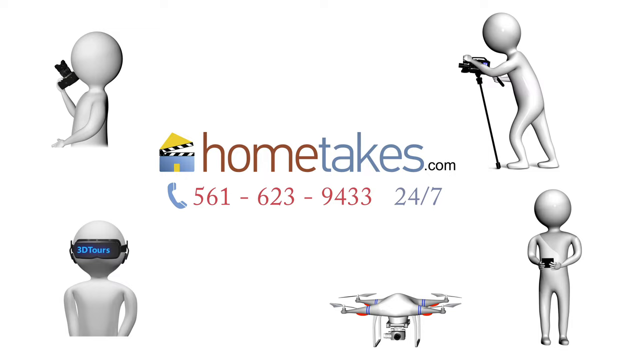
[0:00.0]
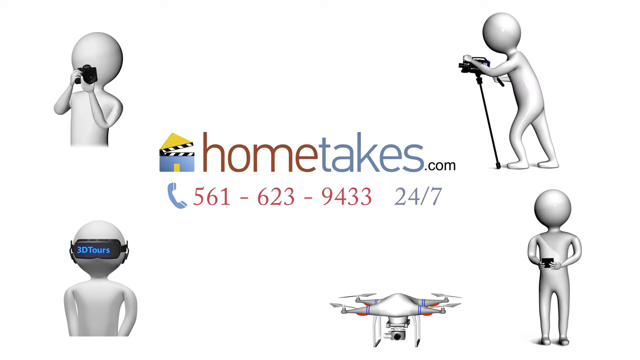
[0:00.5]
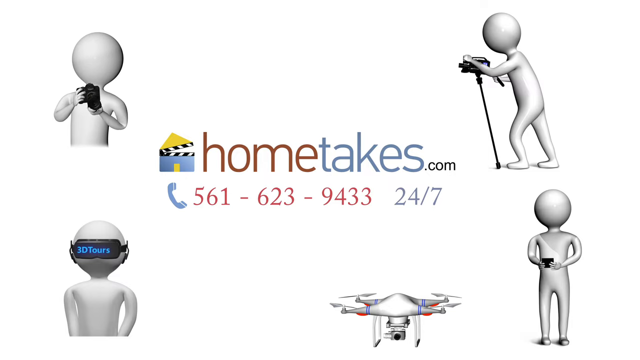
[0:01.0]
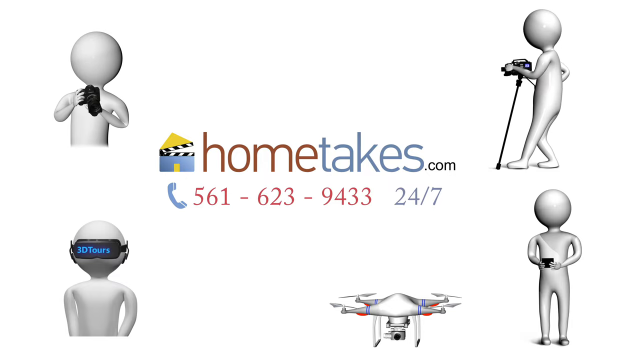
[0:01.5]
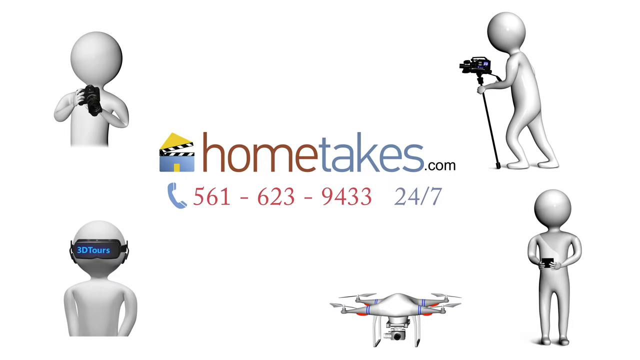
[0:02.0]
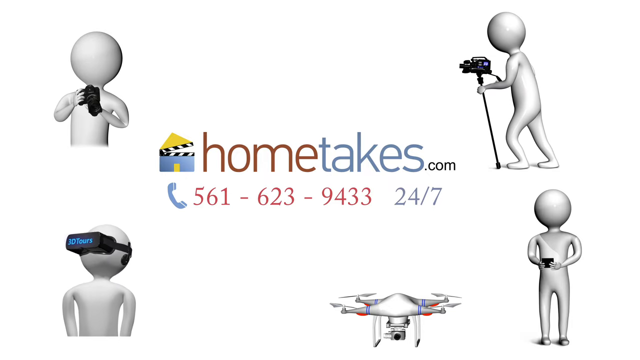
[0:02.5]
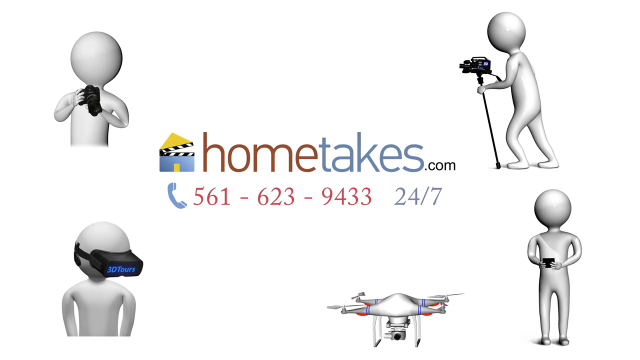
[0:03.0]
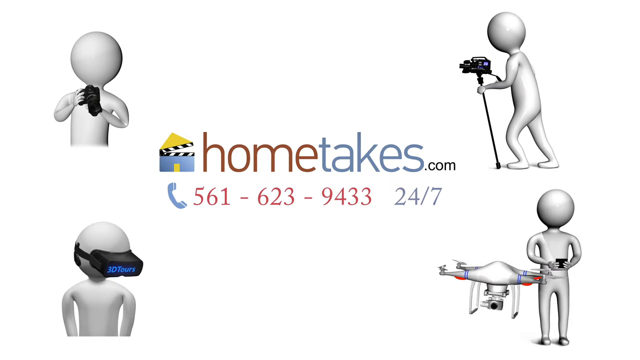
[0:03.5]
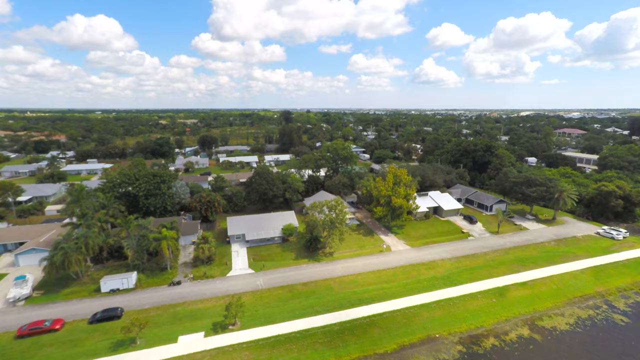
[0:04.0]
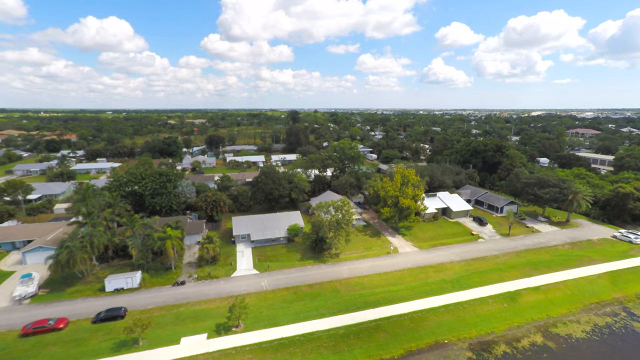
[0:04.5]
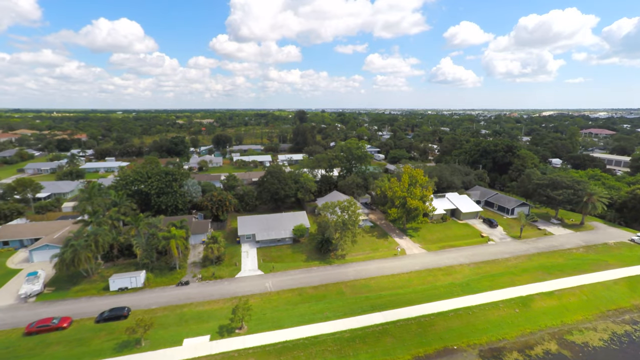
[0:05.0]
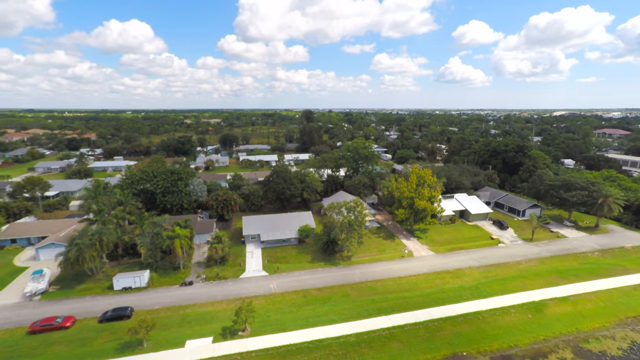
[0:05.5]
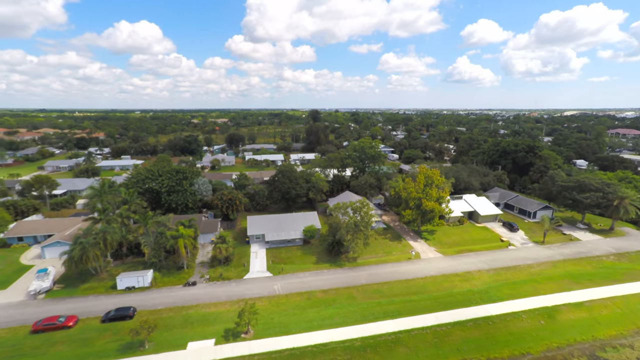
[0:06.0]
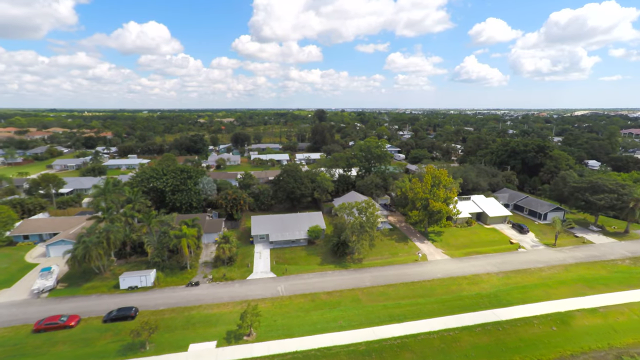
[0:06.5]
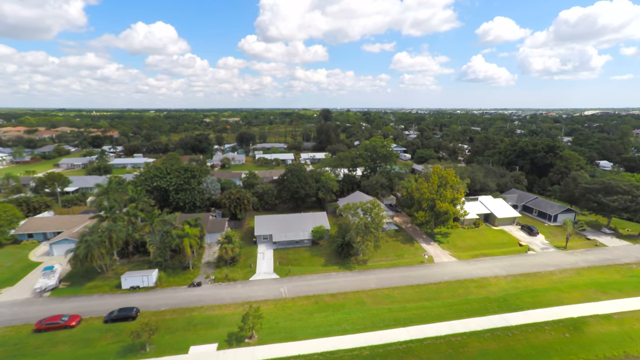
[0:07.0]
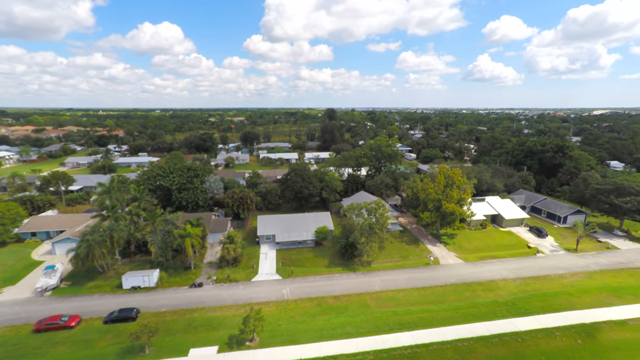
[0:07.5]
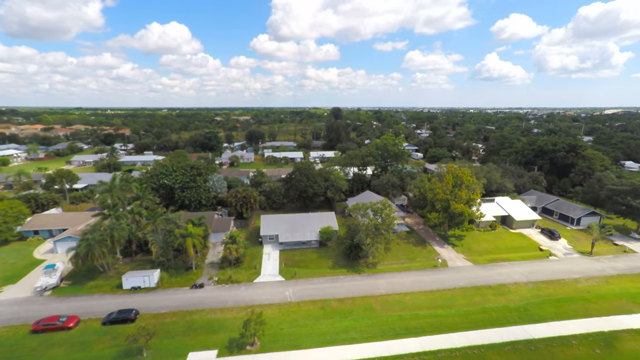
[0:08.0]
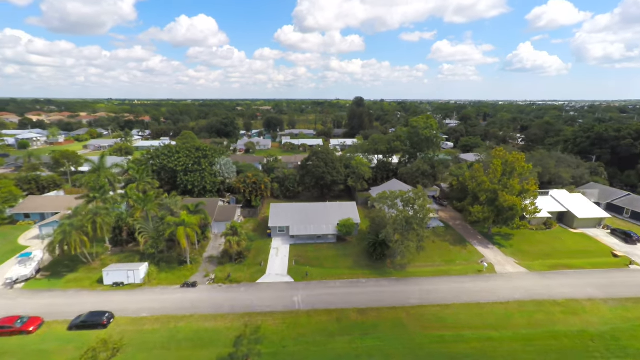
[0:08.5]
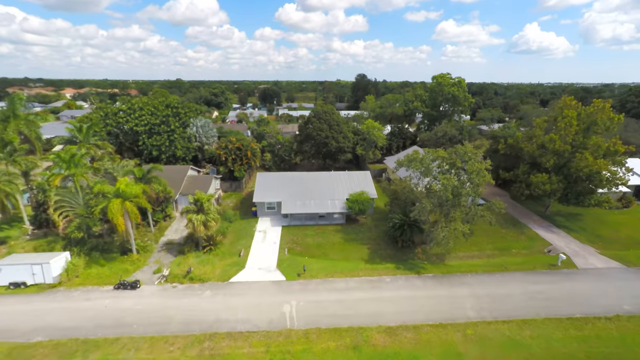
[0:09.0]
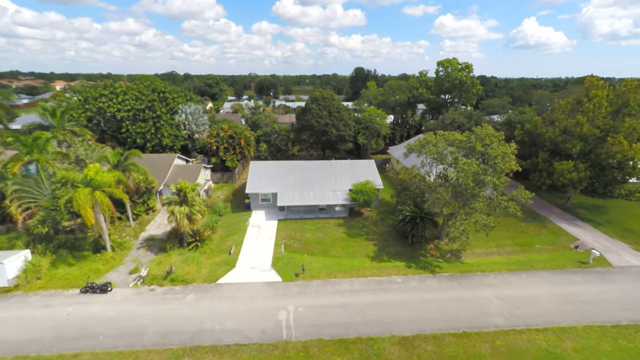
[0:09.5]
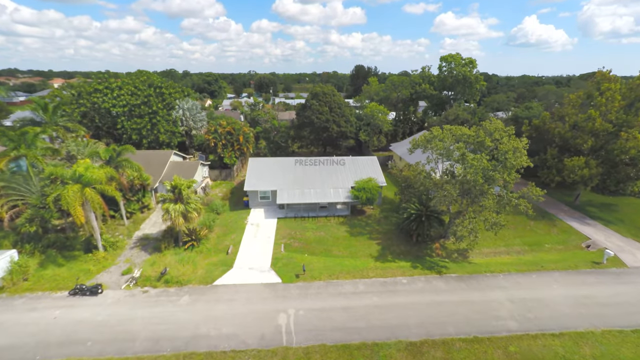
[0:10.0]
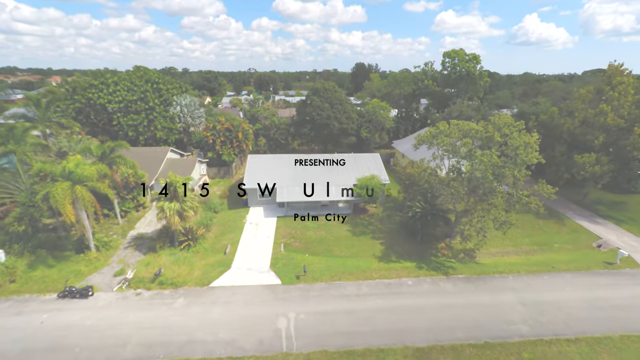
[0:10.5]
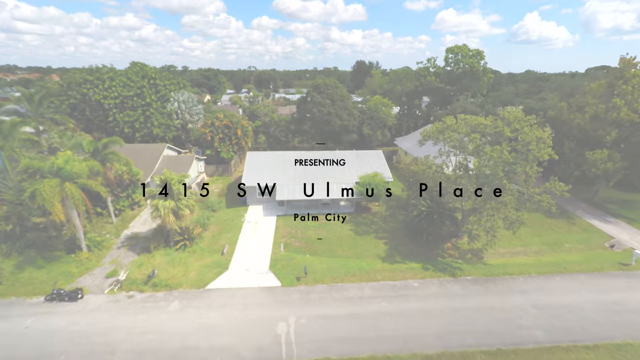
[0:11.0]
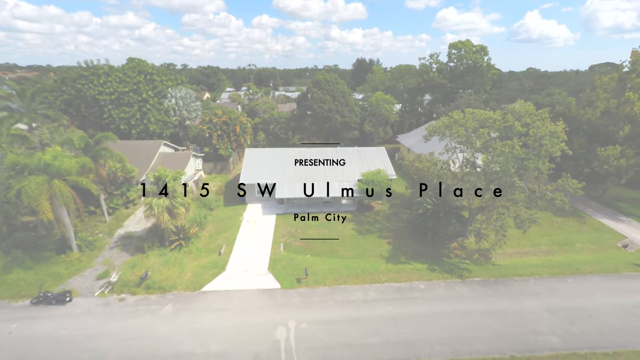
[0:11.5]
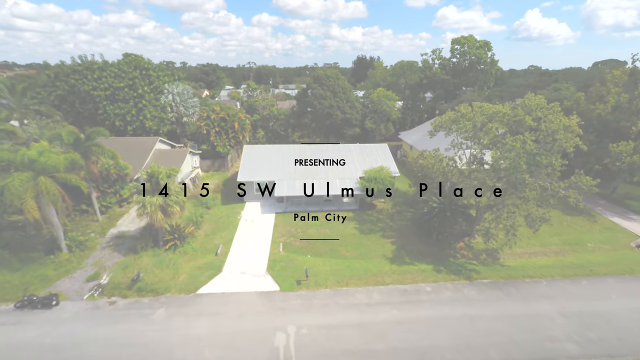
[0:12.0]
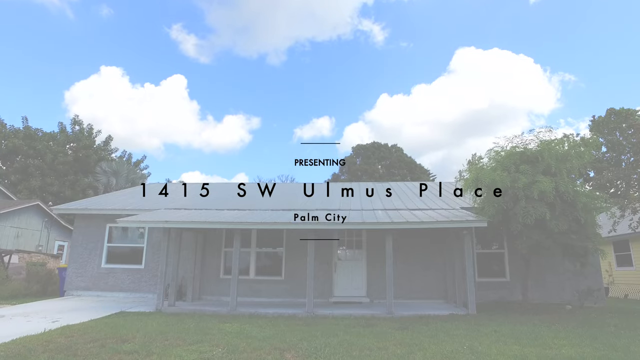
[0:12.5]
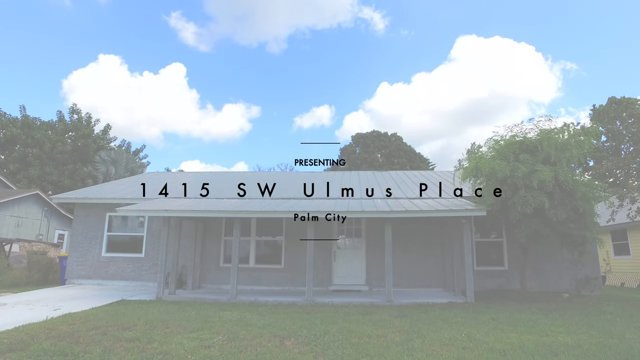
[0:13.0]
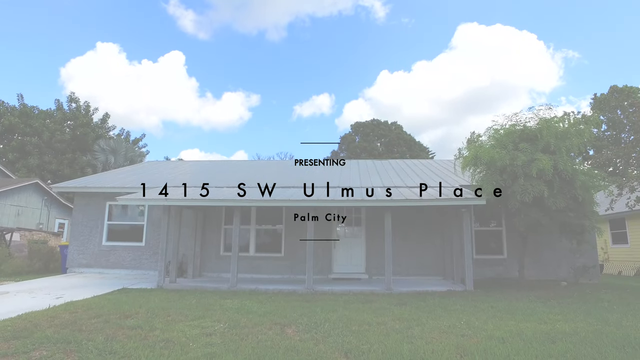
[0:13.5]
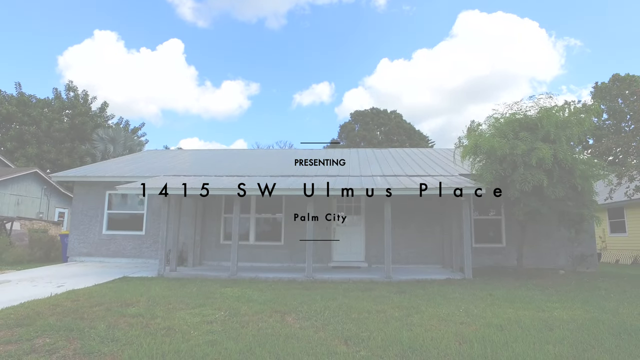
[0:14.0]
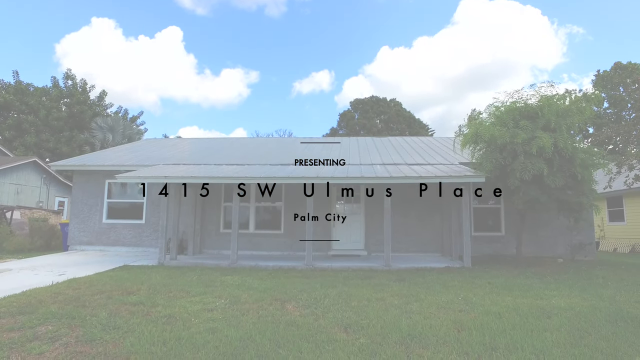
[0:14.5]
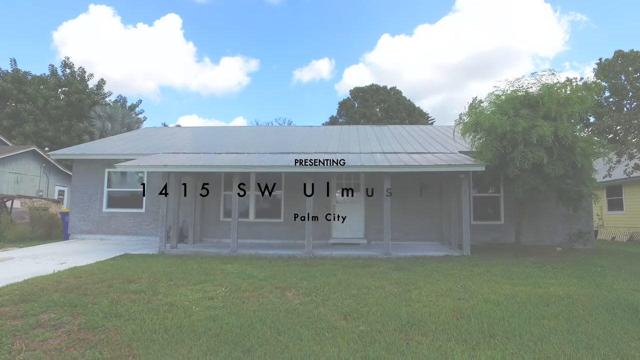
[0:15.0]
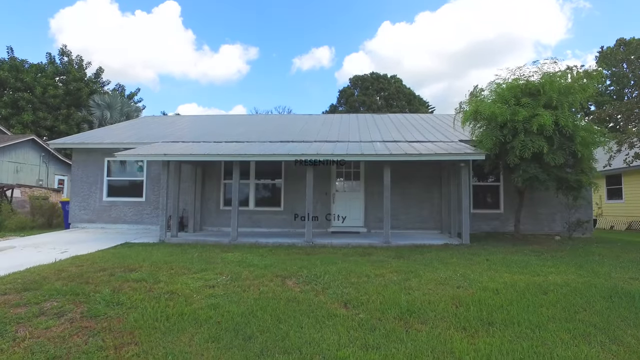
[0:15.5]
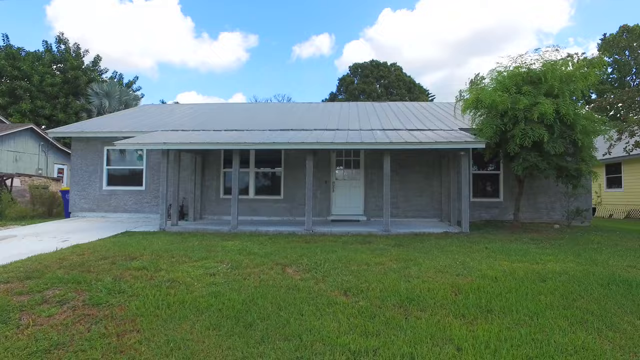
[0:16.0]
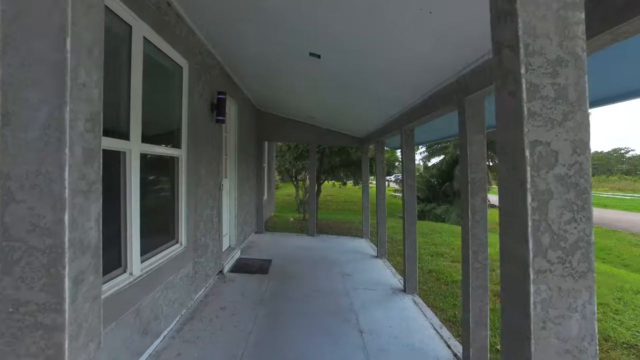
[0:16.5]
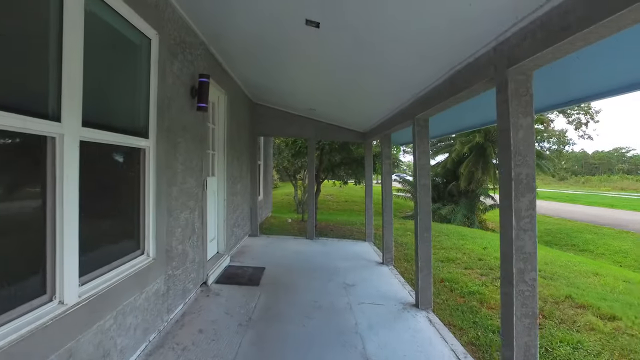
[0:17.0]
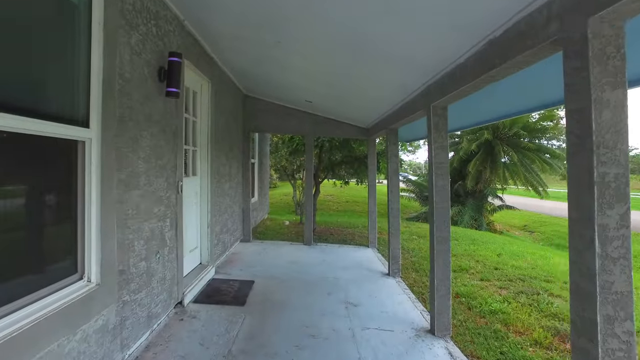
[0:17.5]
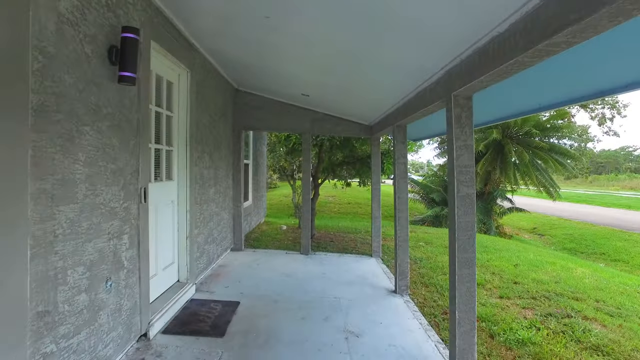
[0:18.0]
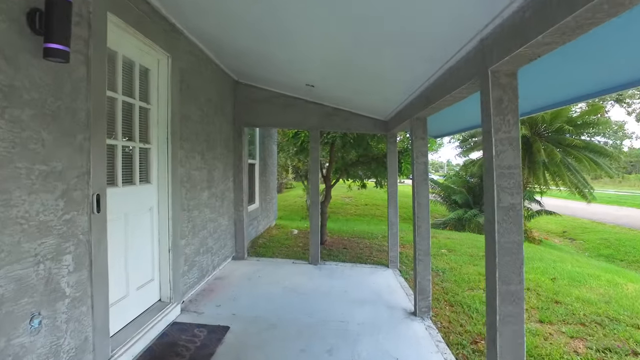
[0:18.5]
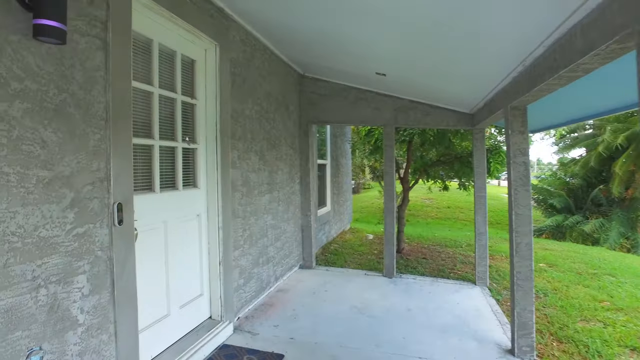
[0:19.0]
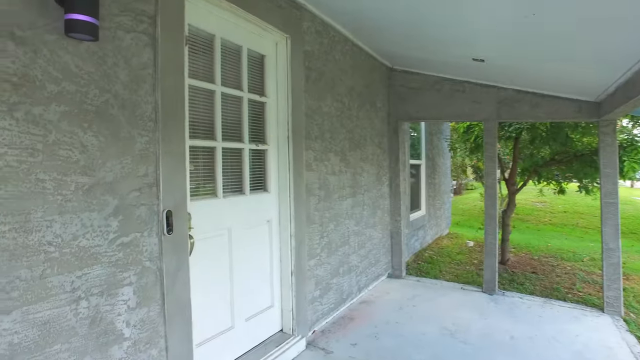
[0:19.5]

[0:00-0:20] The video is an ad for a service from a company named HomeTakes.com. Its logo is a home with its roof sort of open like a film director's board. The phone number 561-623-9433 is given, available 24-7. The beginning of the ad appears to show humanoid-type robots, and there is also a drone. The service takes video of a home using a drone. An aerial view shows blue skies and clouds, with greenery as far as the eye can see and homes close by. The view, apparently from a drone, zooms into one particular home with a lawn, a long driveway and a mature shade tree. Text over the image reads "presenting 1415 Southwest Olmos Place, Palm City."